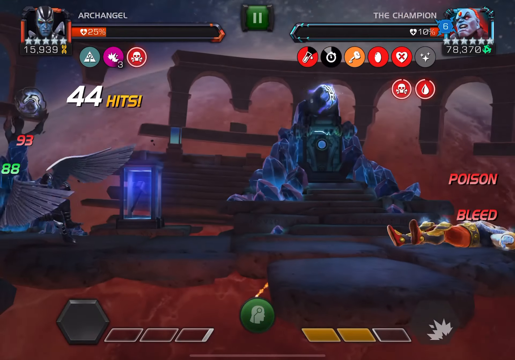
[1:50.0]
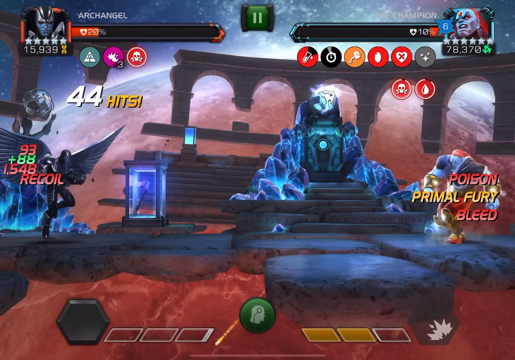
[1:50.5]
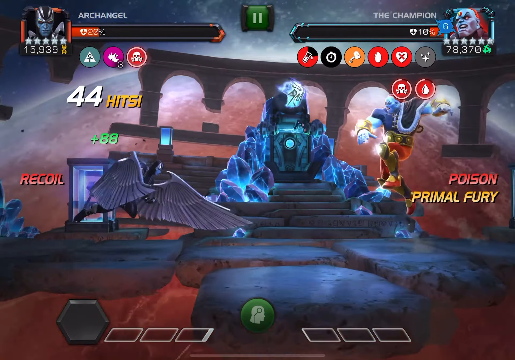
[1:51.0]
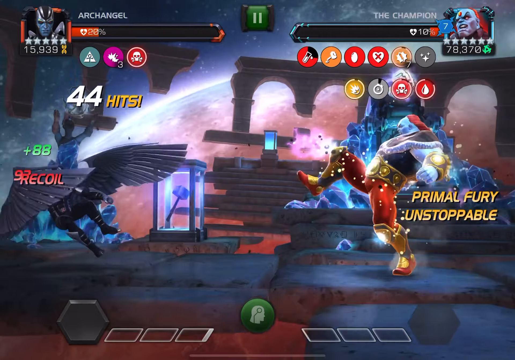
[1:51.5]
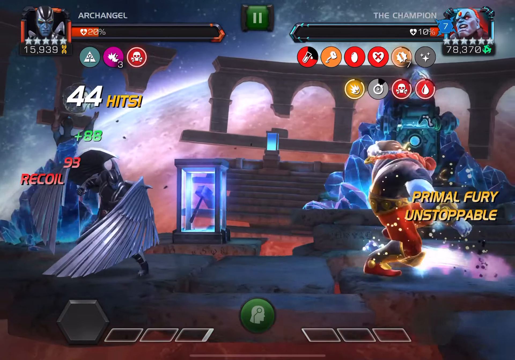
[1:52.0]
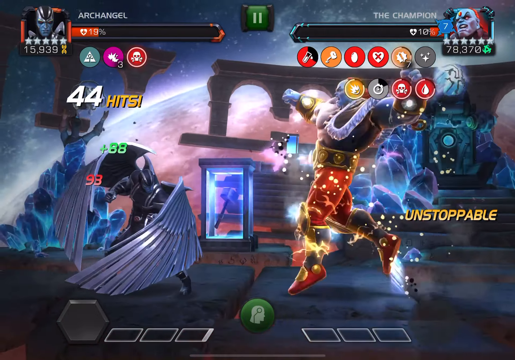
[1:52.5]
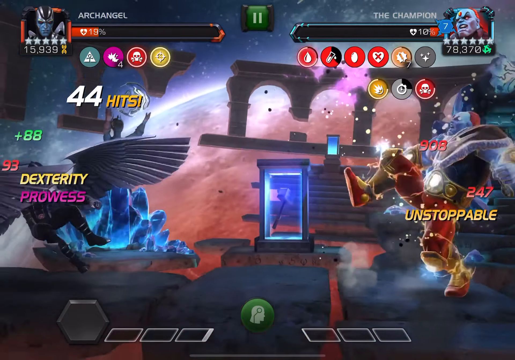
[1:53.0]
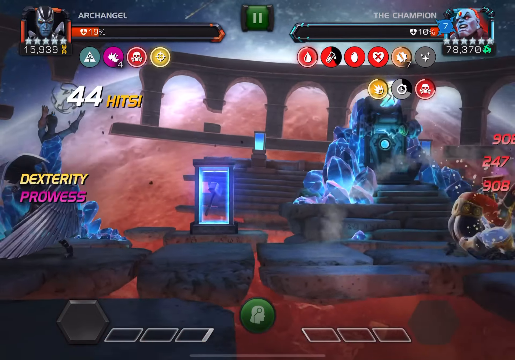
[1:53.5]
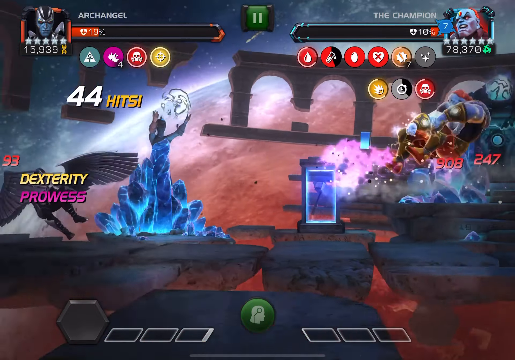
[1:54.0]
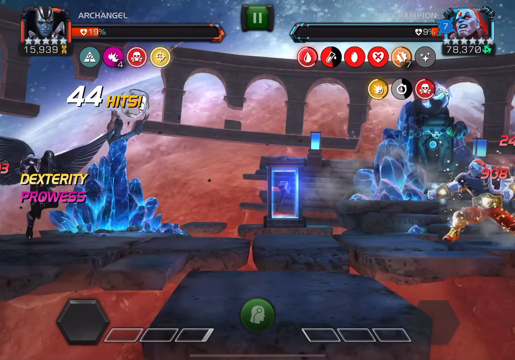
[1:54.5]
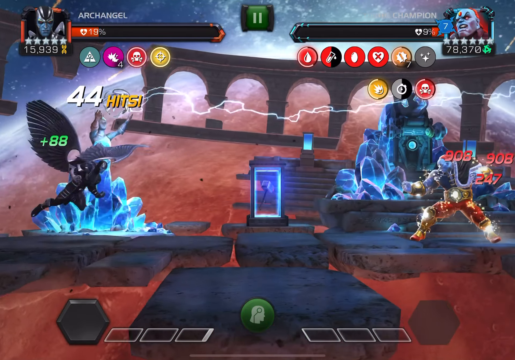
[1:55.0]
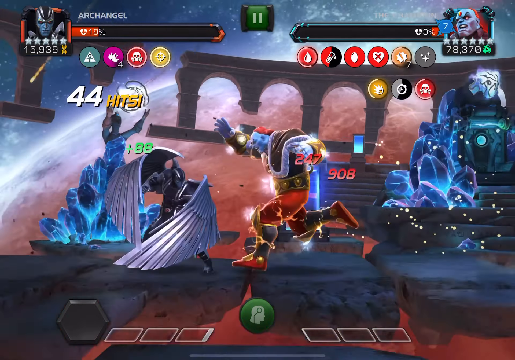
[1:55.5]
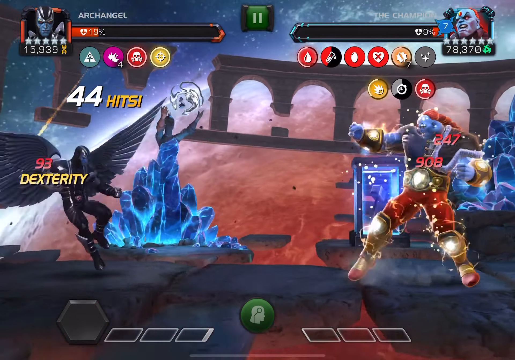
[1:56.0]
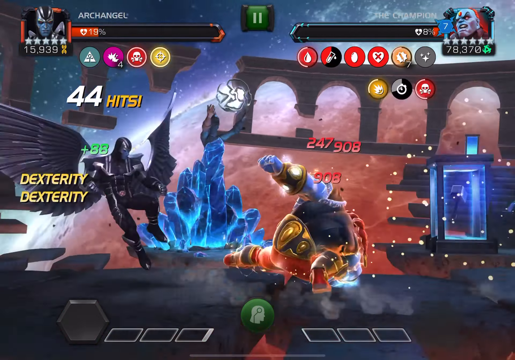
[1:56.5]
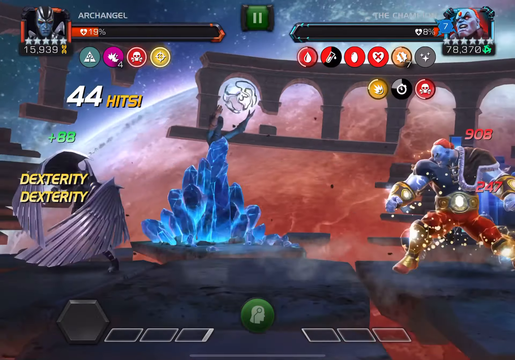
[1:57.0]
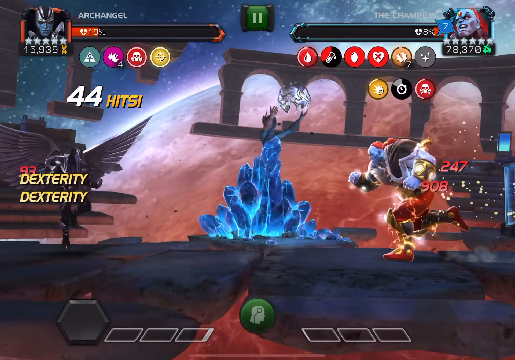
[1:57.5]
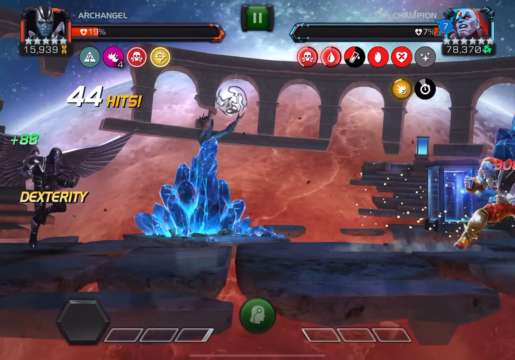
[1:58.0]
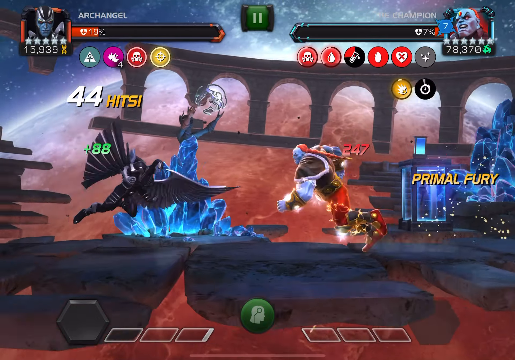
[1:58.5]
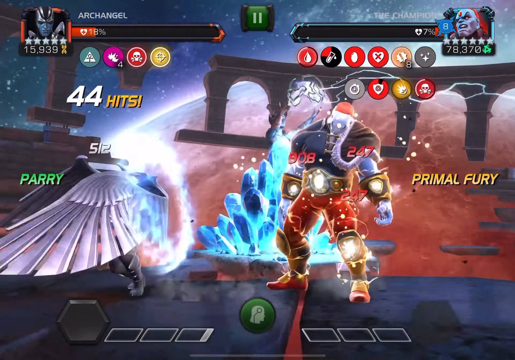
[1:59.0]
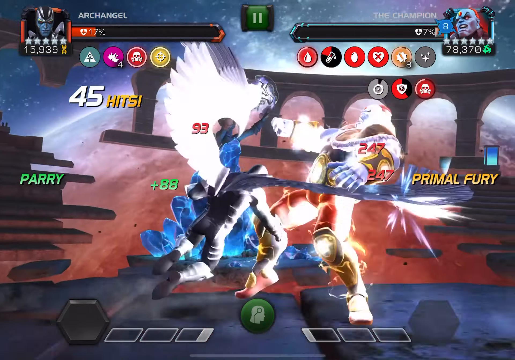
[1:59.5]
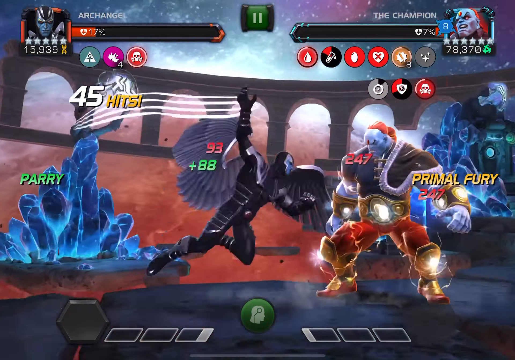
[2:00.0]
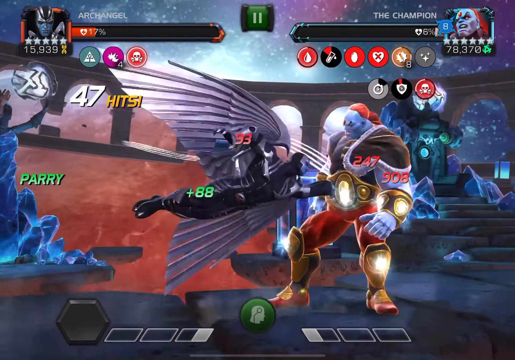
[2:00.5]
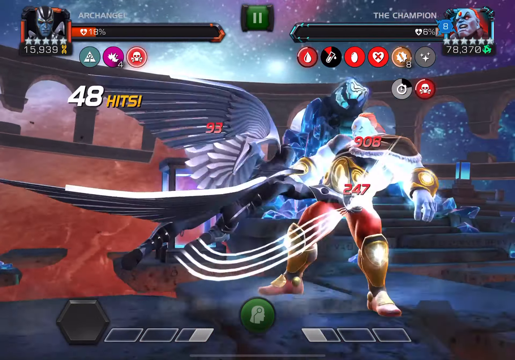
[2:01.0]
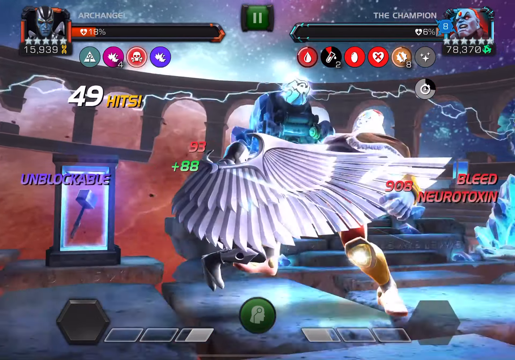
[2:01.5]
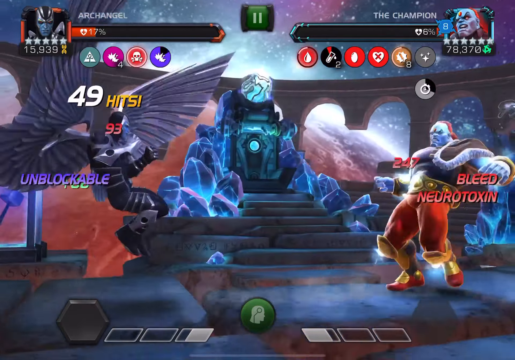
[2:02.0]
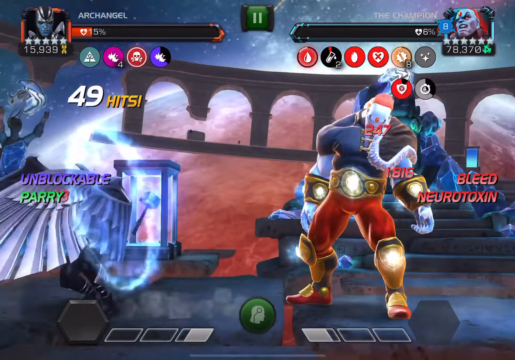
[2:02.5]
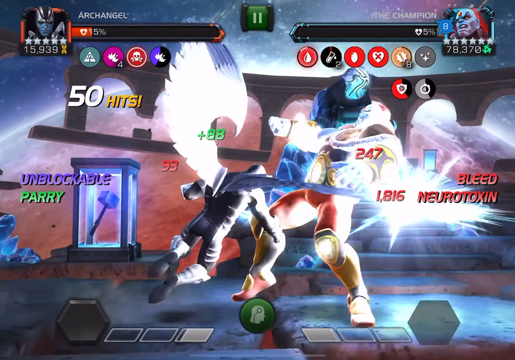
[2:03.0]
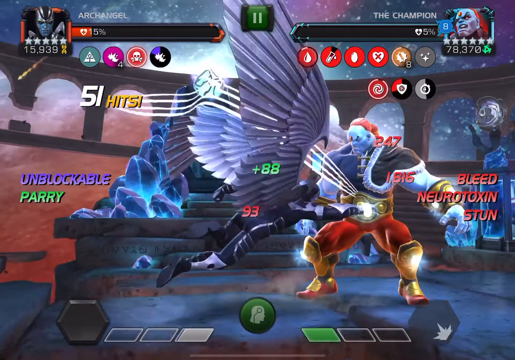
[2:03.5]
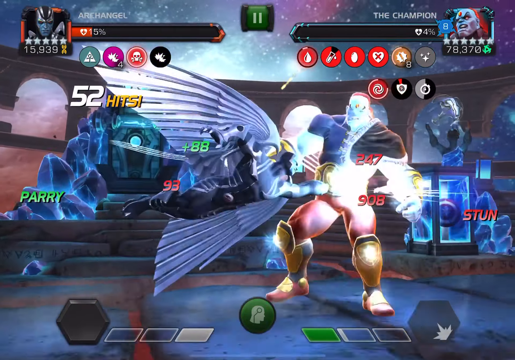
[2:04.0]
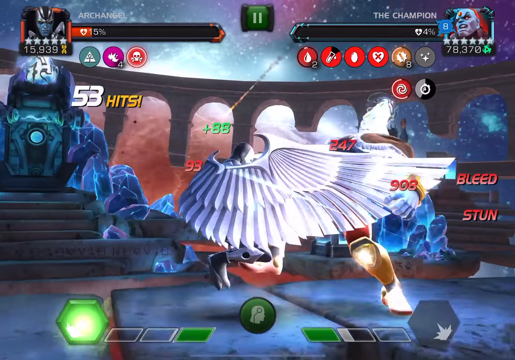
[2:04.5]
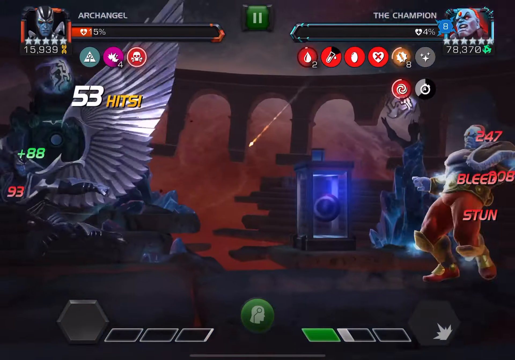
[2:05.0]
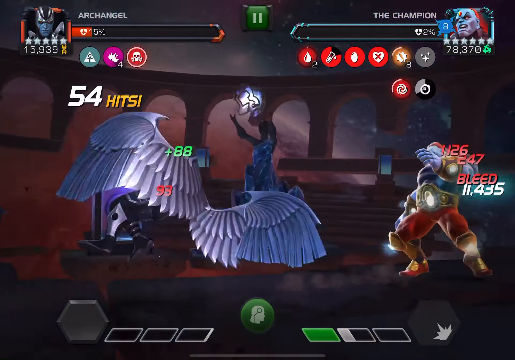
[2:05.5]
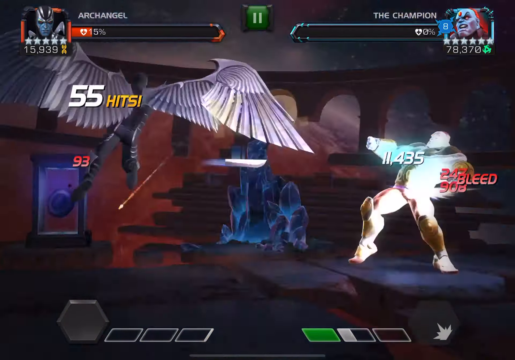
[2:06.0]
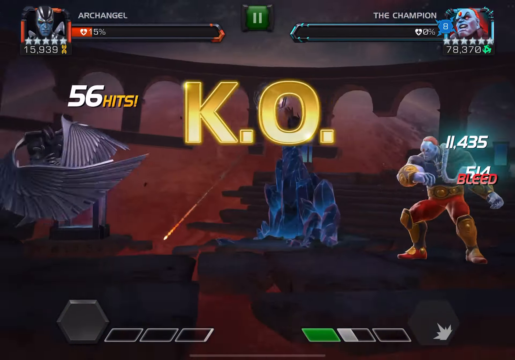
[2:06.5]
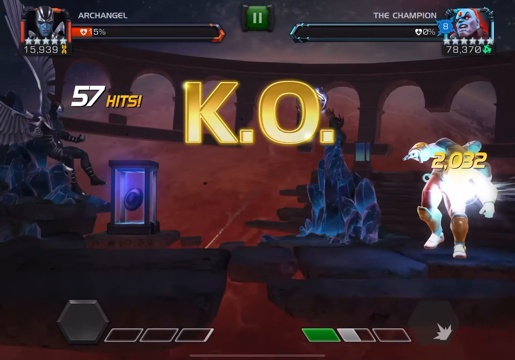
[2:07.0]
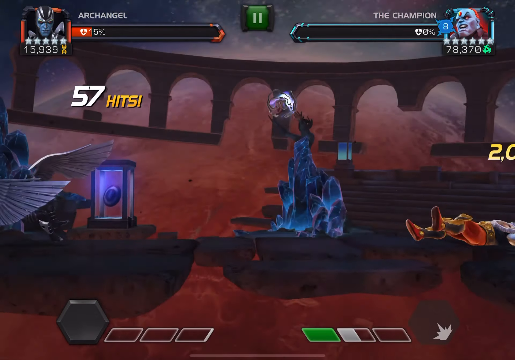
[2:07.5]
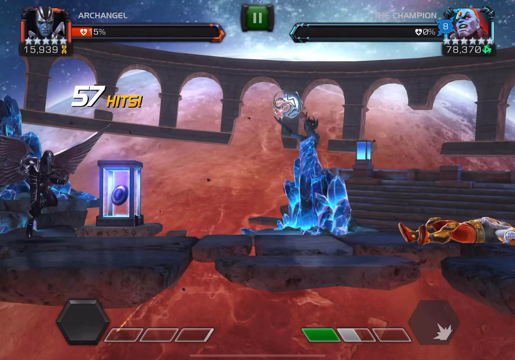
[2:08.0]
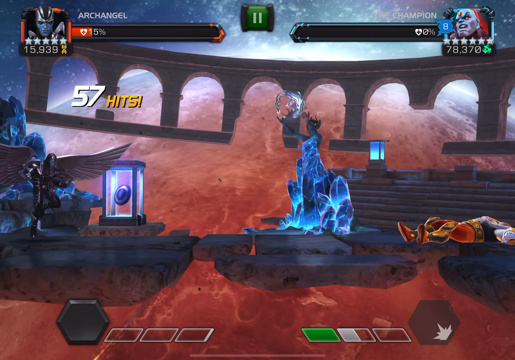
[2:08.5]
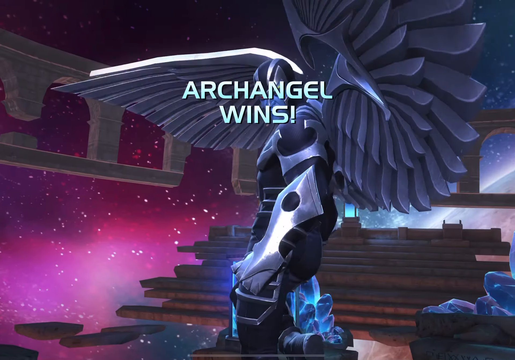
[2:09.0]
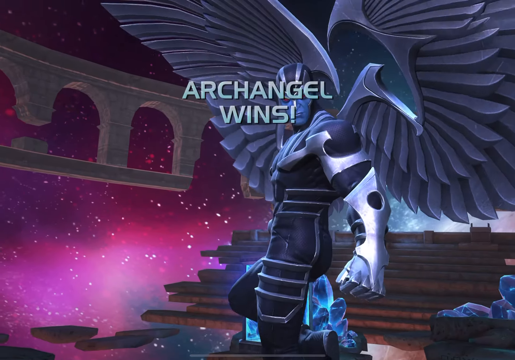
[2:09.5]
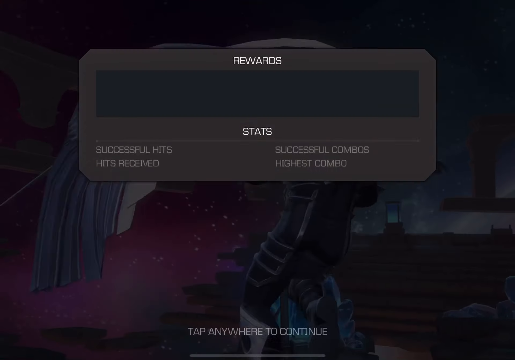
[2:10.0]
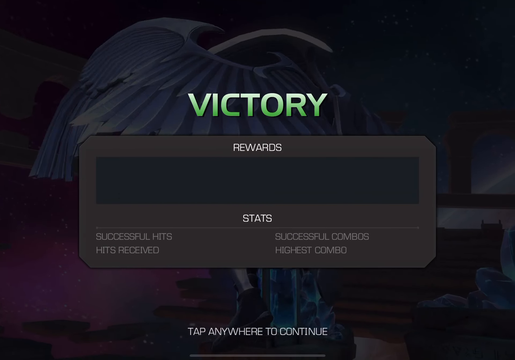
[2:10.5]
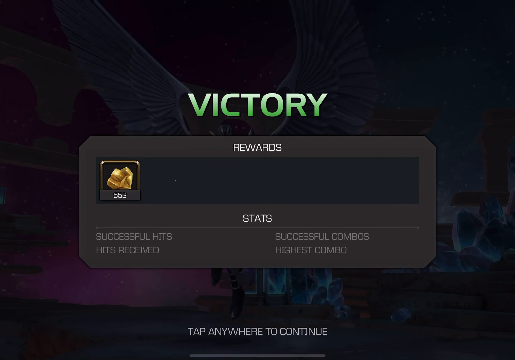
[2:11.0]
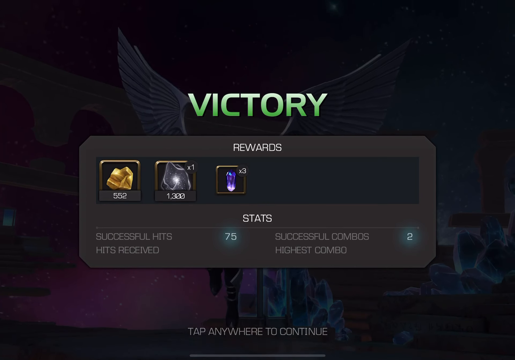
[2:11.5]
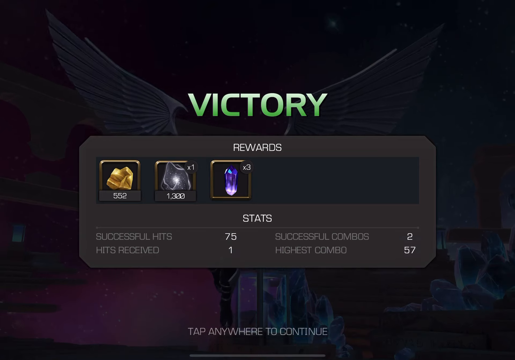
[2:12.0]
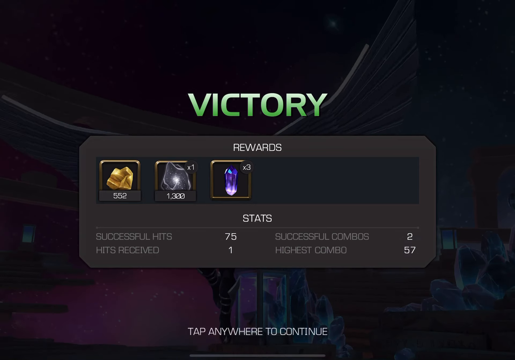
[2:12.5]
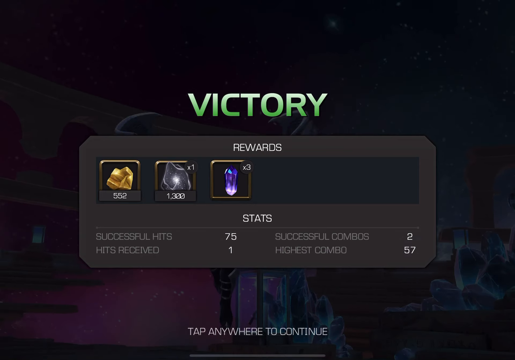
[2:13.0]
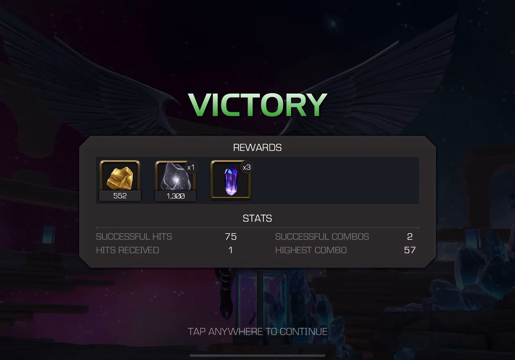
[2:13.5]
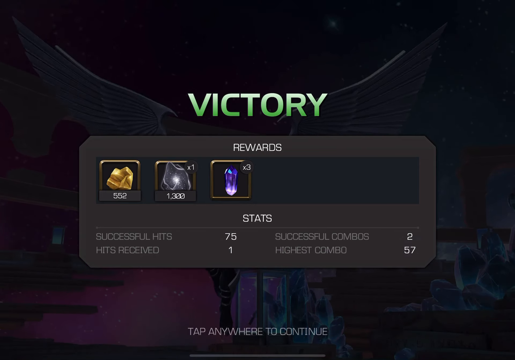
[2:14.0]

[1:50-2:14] In the fighting game, Archangel is like a black angel, and the Champion is a blue, kind of muscular man with what looks like an orange ponytail, an orange gem on his head, orange pants, gold boots, a gold belt and gold gauntlets. They fight on what look like random floating parts of a coliseum exploding in space. Archangel's health bar is on the left at 19 percent, and the Champion's is on the right at 10 percent. Archangel has a 44-hit combo and keeps dodging the Champion's hits, with the counter rising to 50, 51, 52, 53 and 54 hits. Archangel eventually knocks out the Champion and wins the match, and the victory and its rewards pop up.